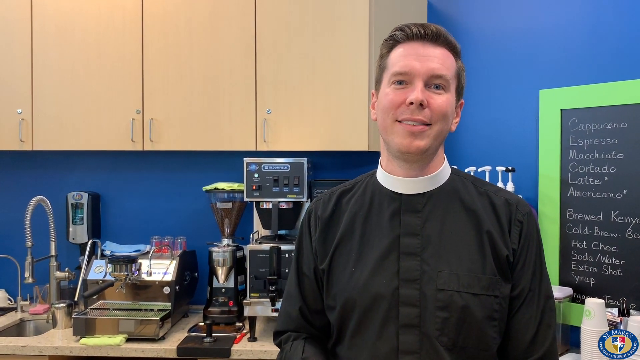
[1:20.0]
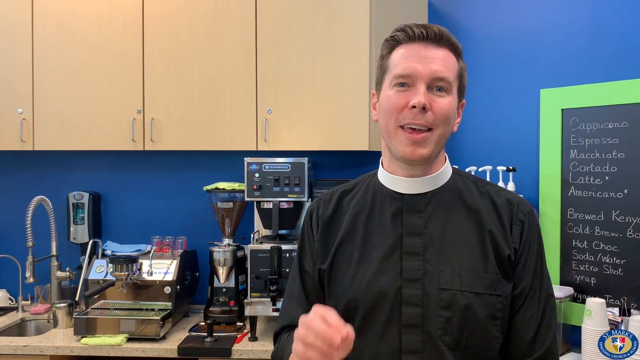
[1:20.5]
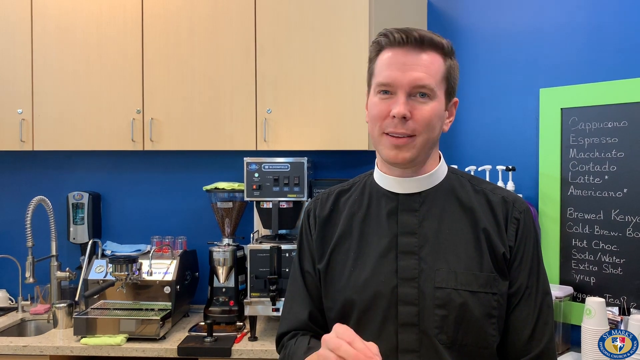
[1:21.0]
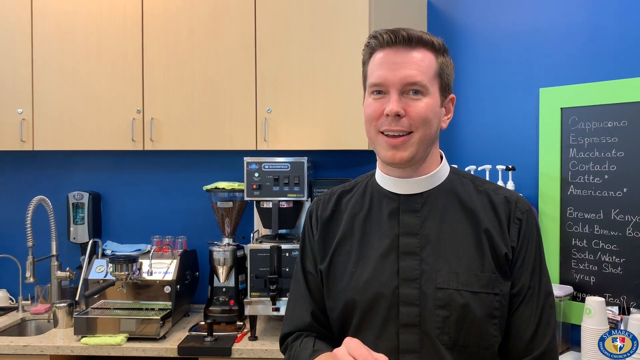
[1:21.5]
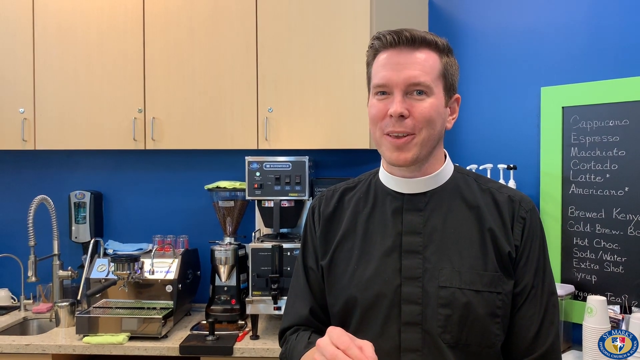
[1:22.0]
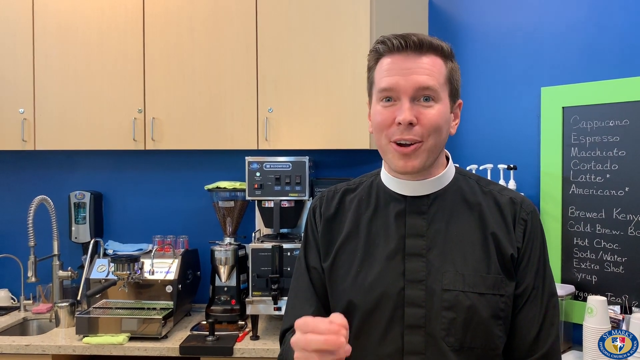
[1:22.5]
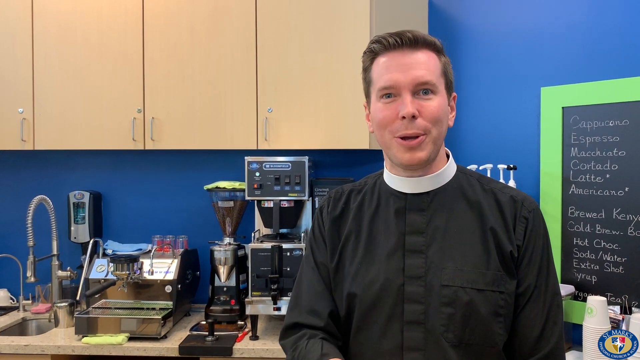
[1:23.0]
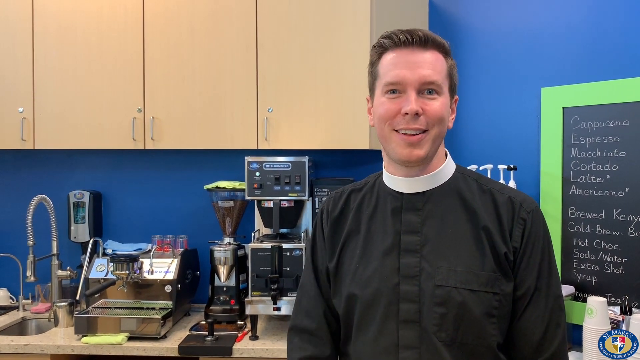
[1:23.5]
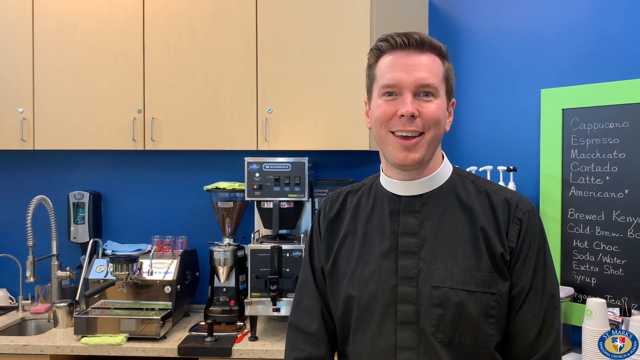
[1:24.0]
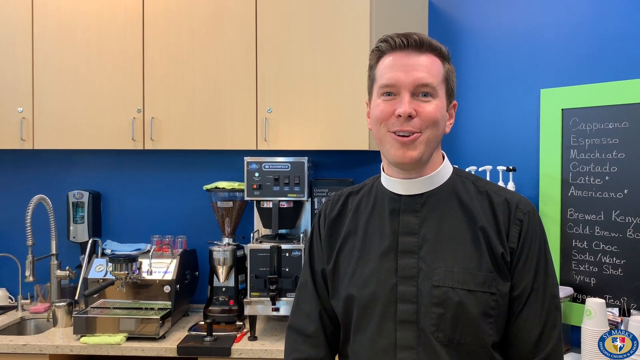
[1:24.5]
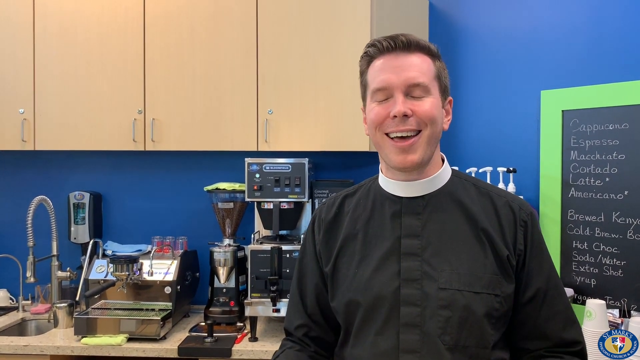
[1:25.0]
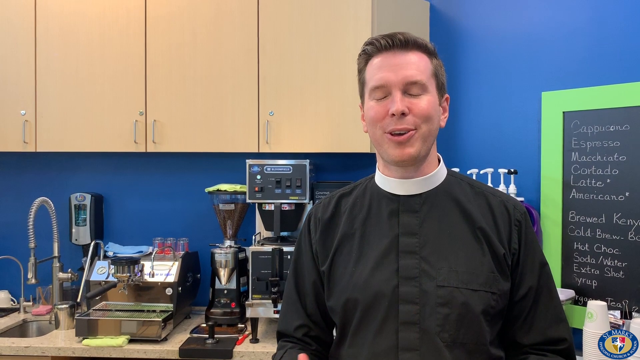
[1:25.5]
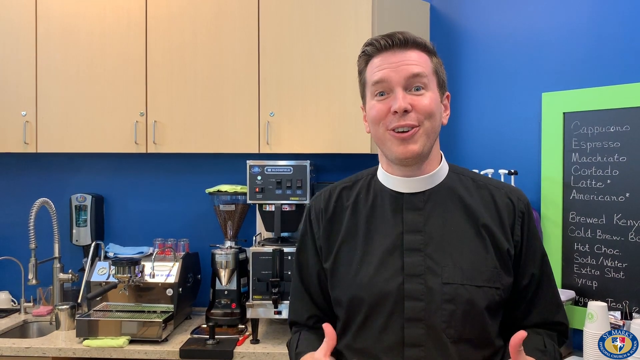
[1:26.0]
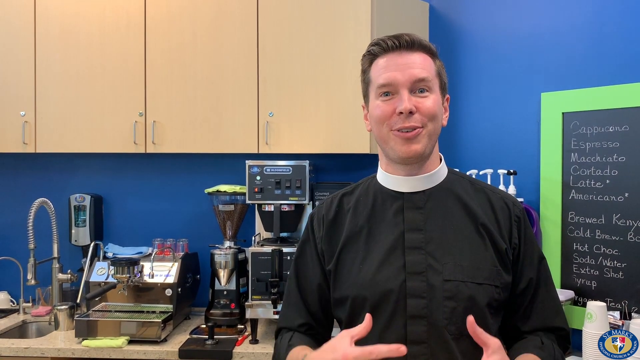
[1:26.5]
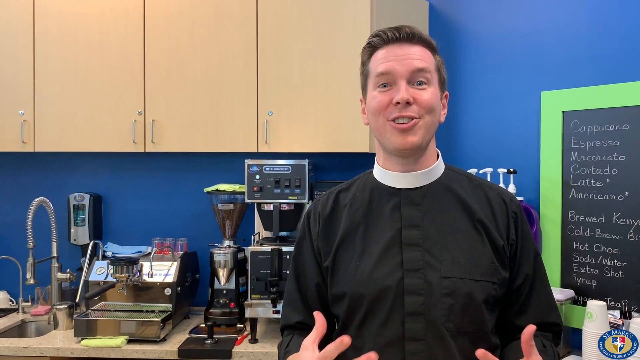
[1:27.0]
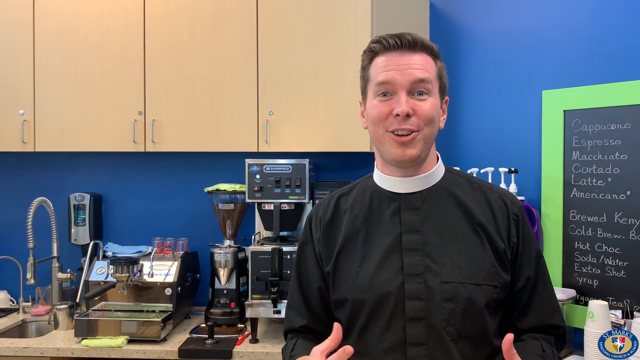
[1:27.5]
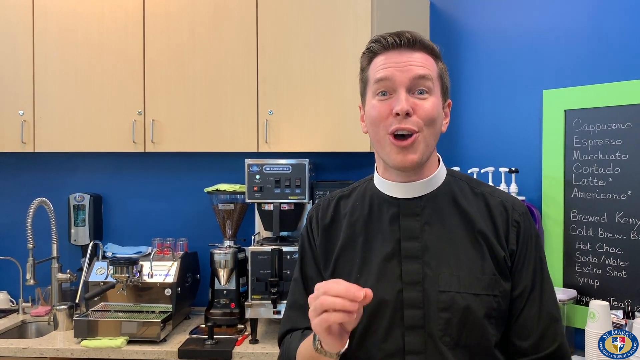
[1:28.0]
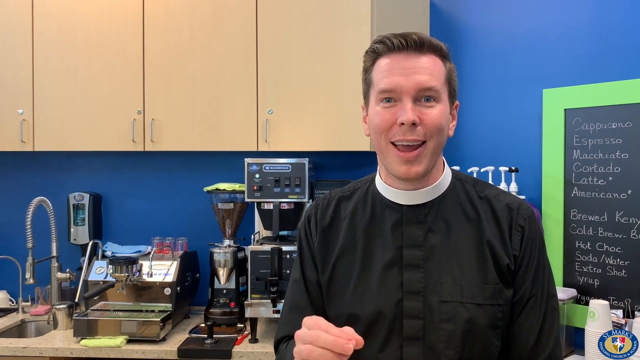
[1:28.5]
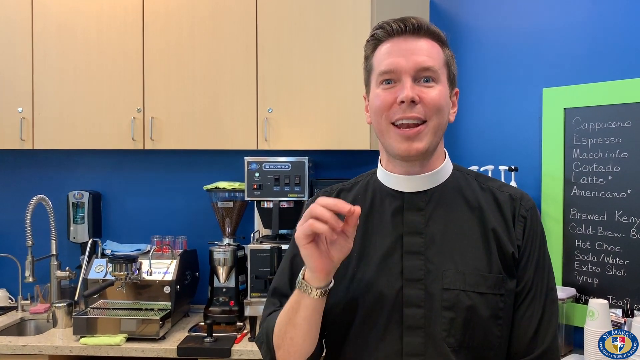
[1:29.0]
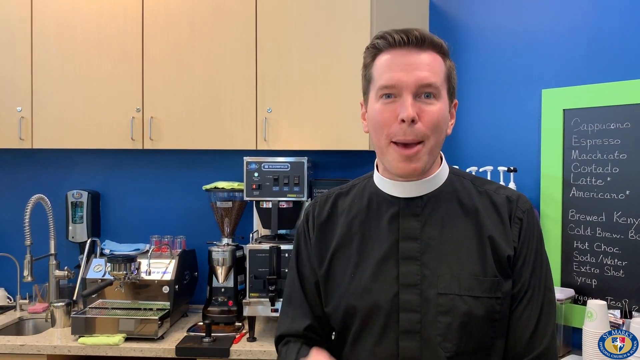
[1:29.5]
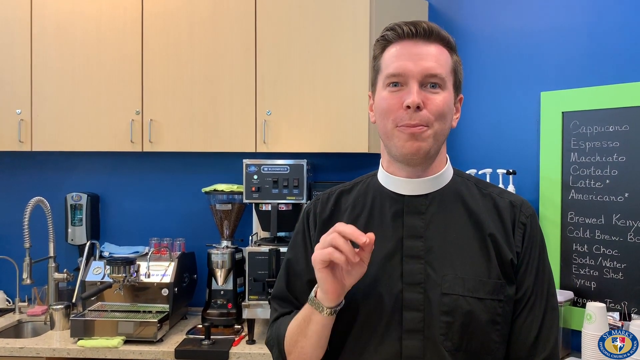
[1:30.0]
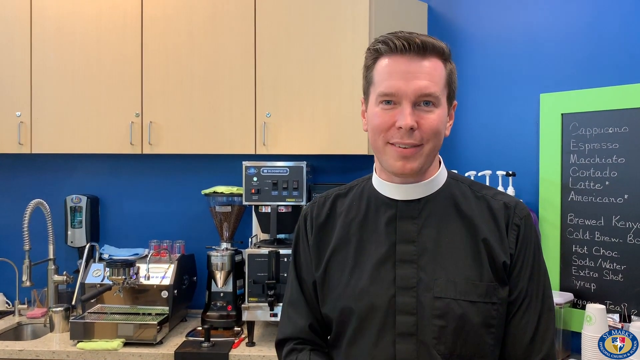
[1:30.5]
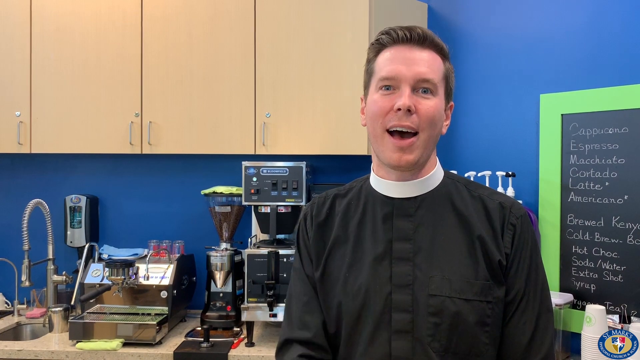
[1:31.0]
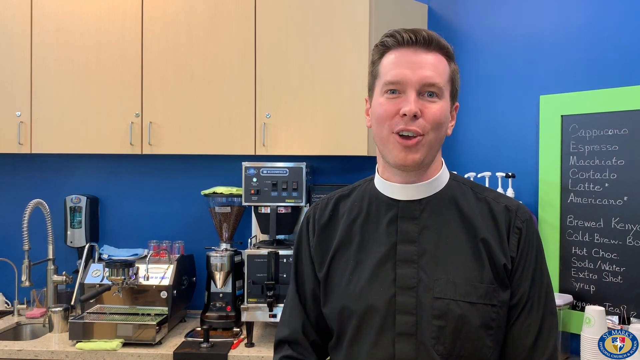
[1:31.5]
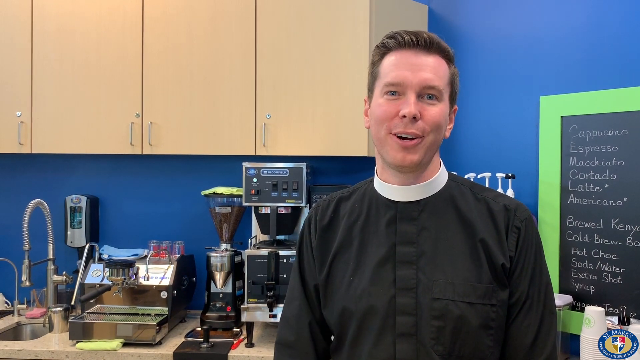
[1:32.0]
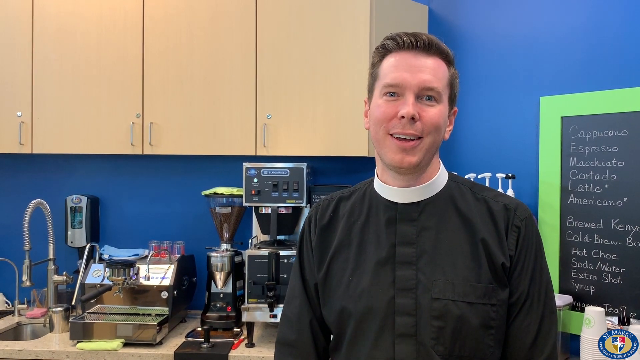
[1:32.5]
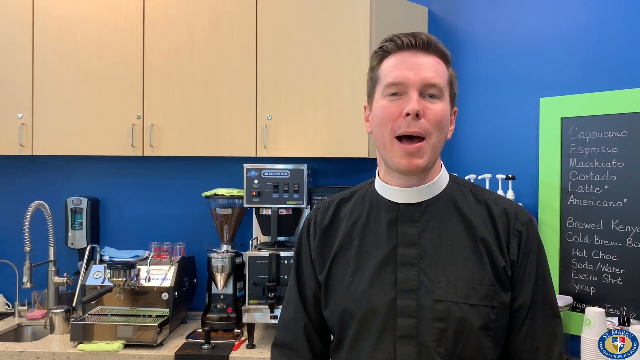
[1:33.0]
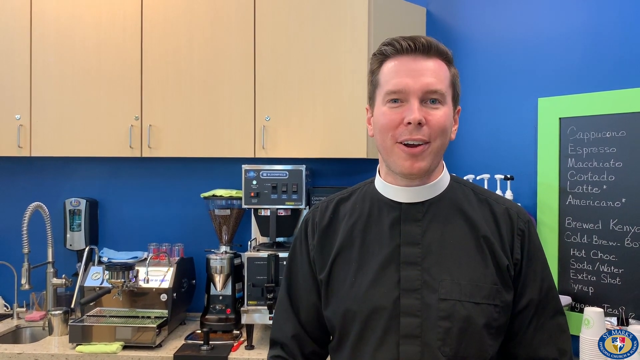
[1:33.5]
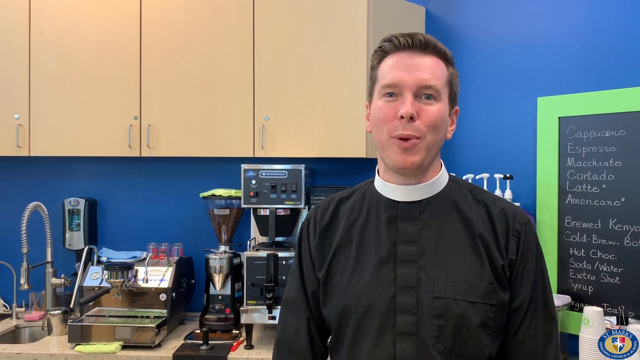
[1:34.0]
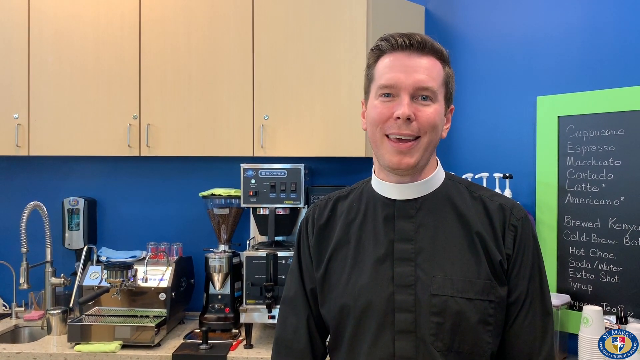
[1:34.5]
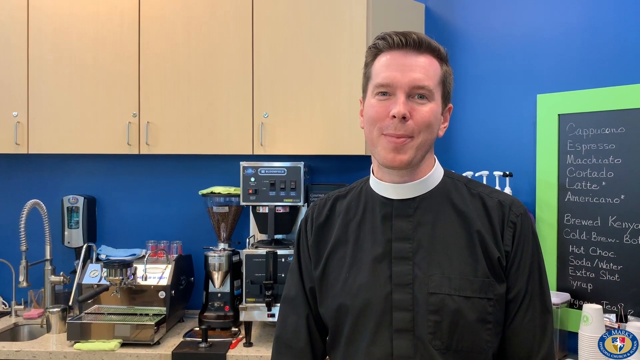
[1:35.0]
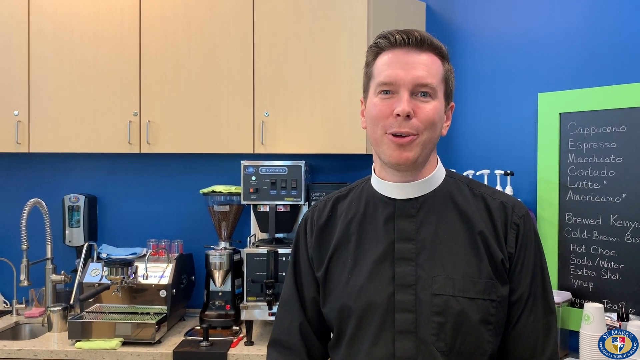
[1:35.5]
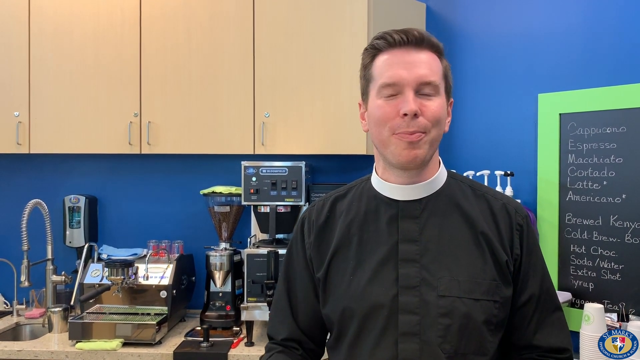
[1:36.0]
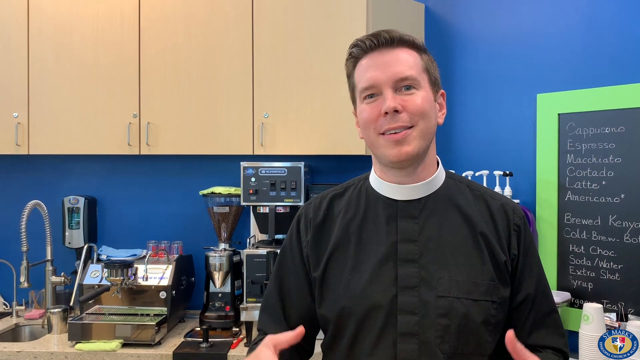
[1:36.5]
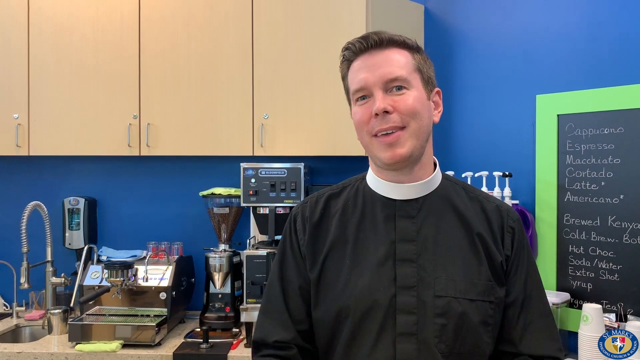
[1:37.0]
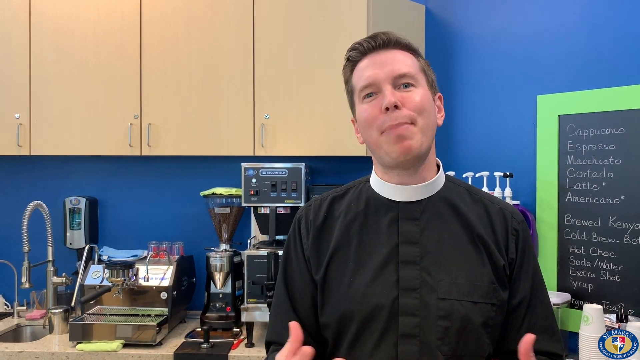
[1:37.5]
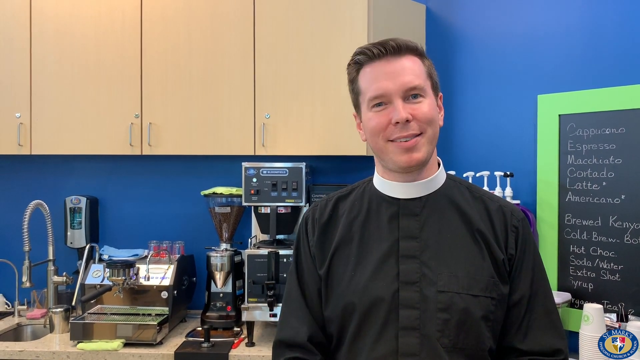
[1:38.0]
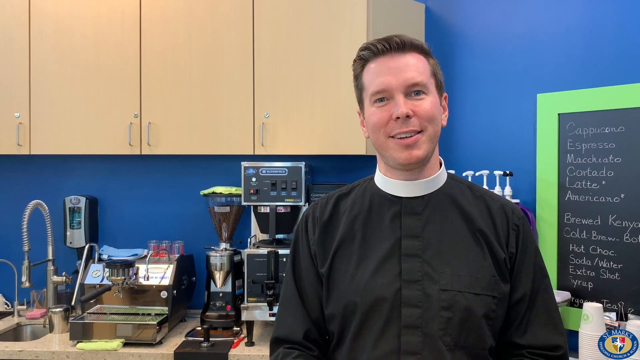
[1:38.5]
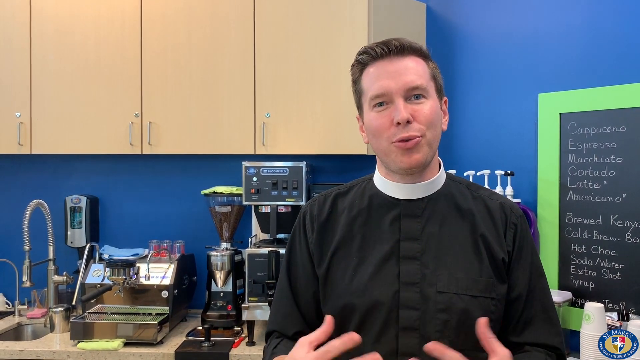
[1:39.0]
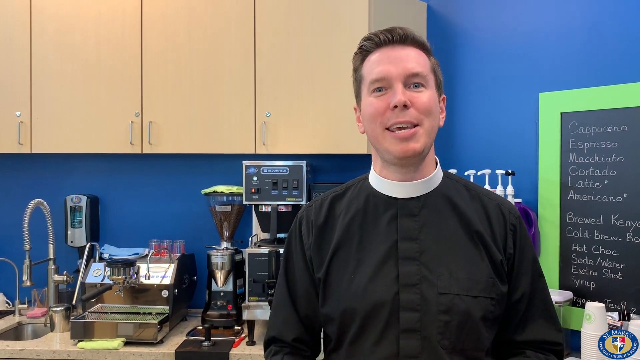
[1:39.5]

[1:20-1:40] The Reverend continues speaking with no subtitles, appearing to try to reassure the audience about something. He makes many waving gestures with his hands, as if trying to prove a point. Right behind him is a rack of syrups and bottle pumps on the top shelf, with more syrups on the bottom rack. He wears a black priestly robe with a white collar. In the bottom right corner of the screen is a very tiny watermark or logo, apparently St. Mark's, with the school's emblem: a shield in quarters, each quarter a different color.